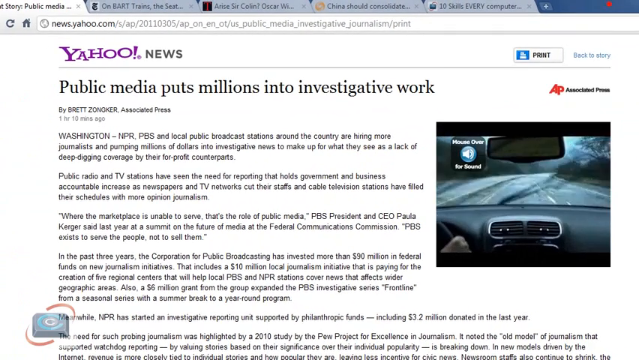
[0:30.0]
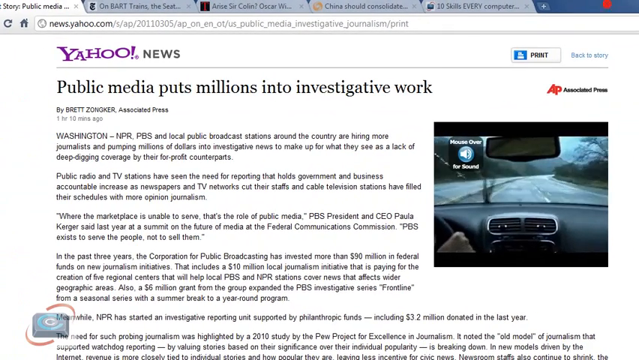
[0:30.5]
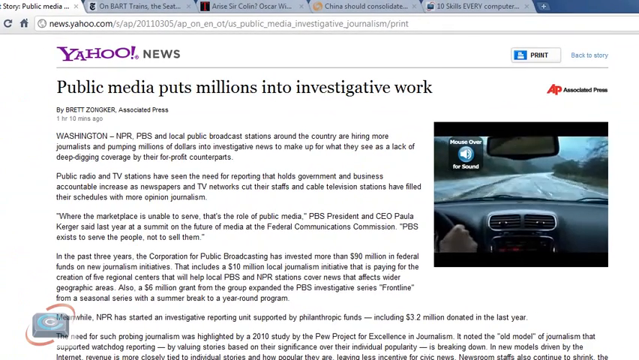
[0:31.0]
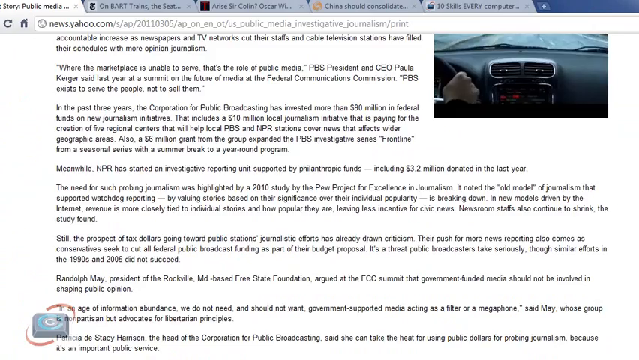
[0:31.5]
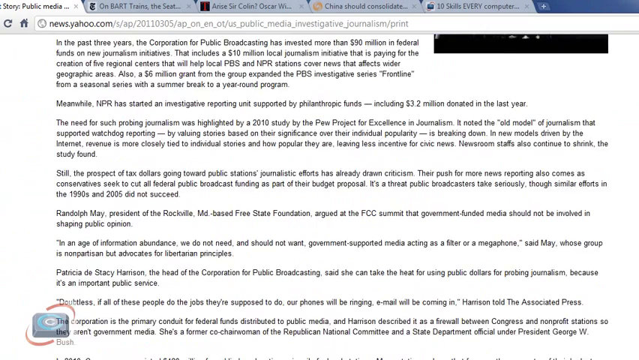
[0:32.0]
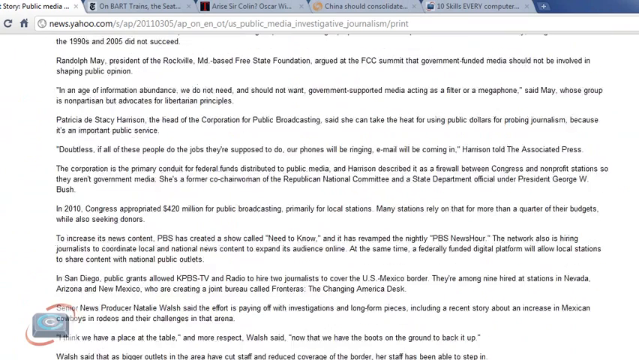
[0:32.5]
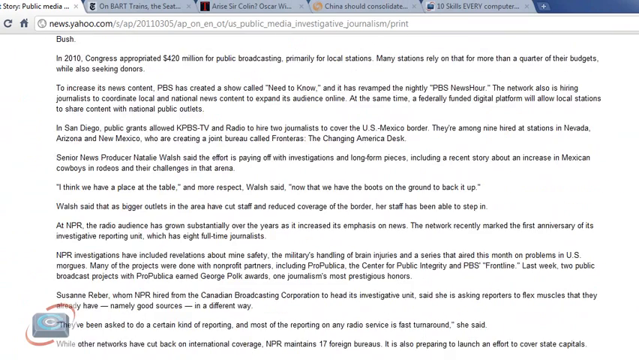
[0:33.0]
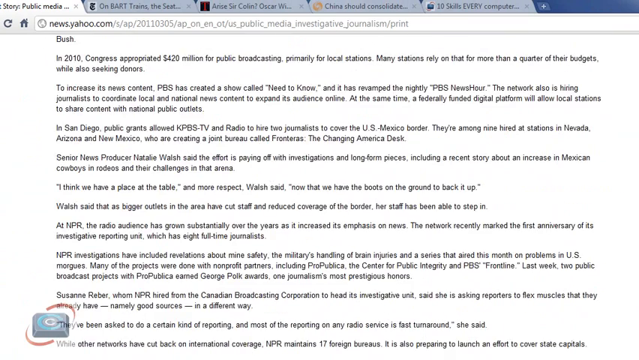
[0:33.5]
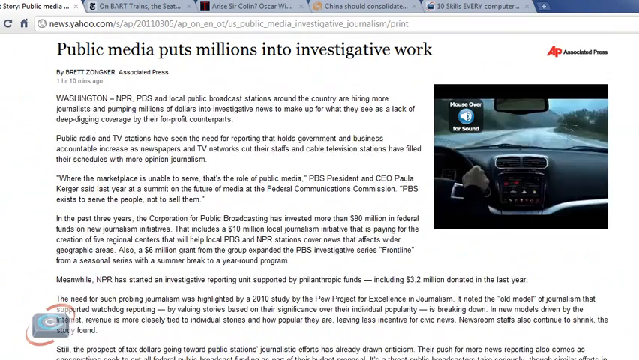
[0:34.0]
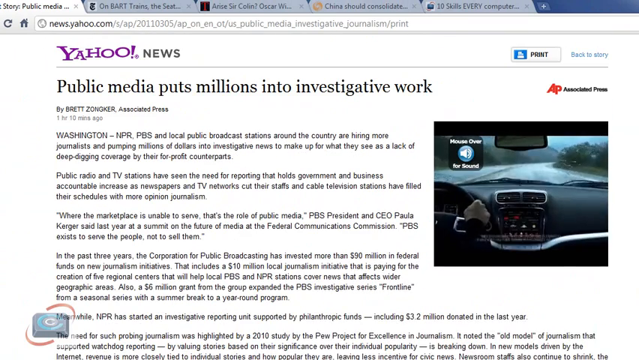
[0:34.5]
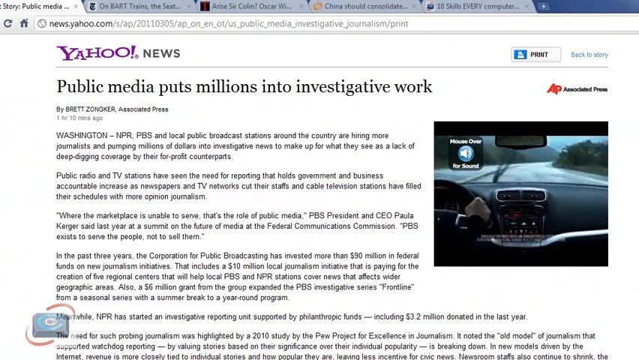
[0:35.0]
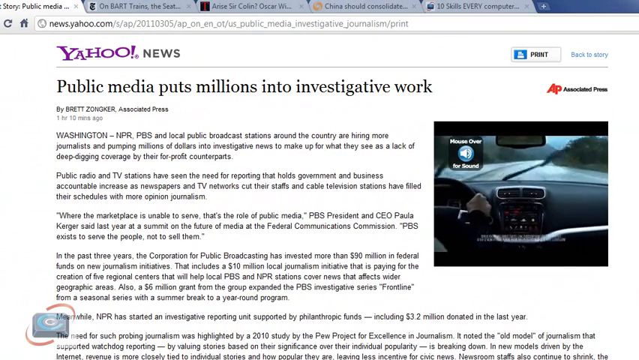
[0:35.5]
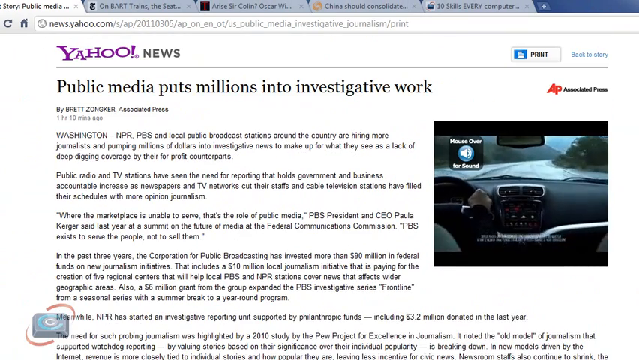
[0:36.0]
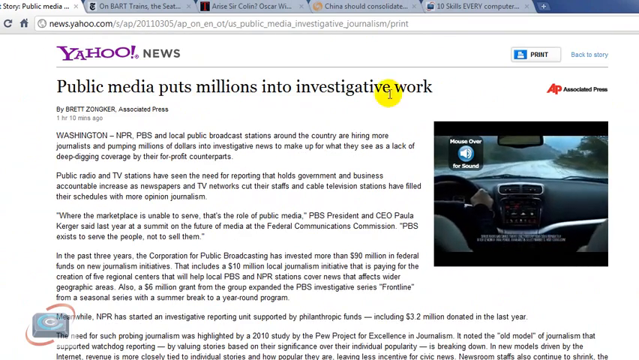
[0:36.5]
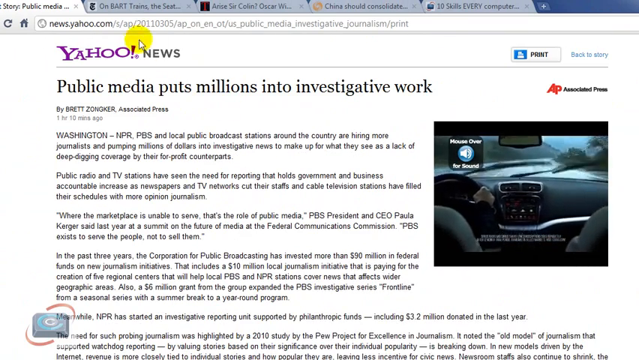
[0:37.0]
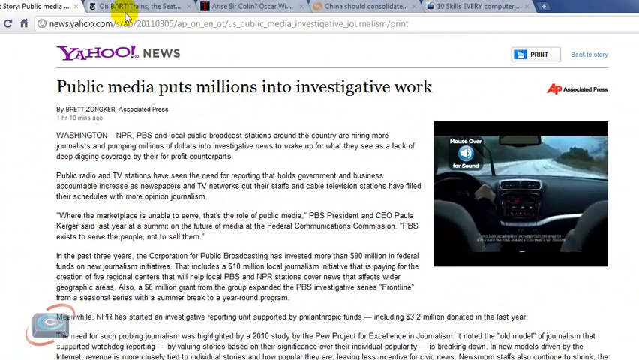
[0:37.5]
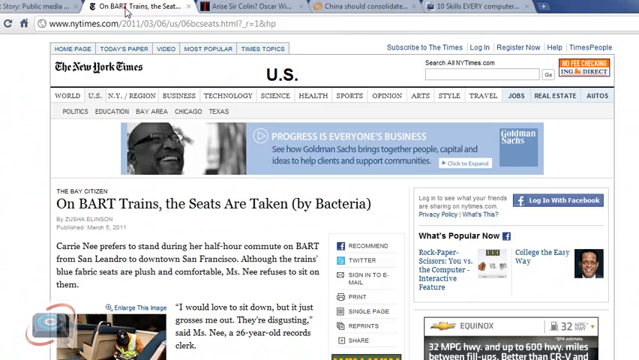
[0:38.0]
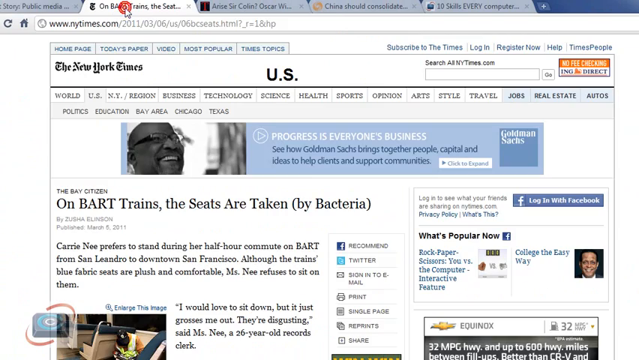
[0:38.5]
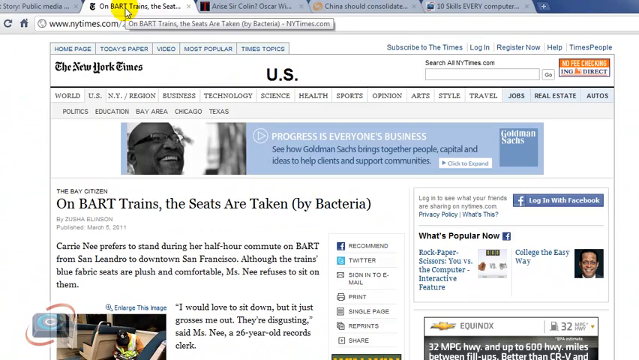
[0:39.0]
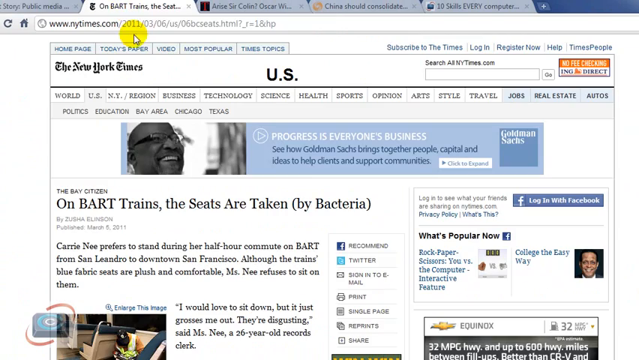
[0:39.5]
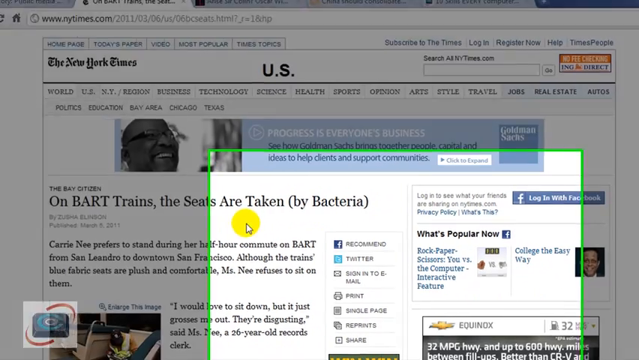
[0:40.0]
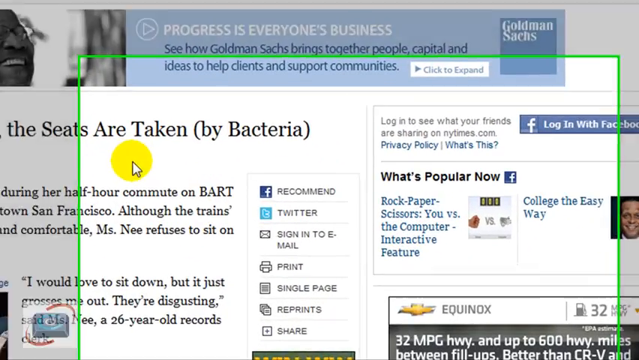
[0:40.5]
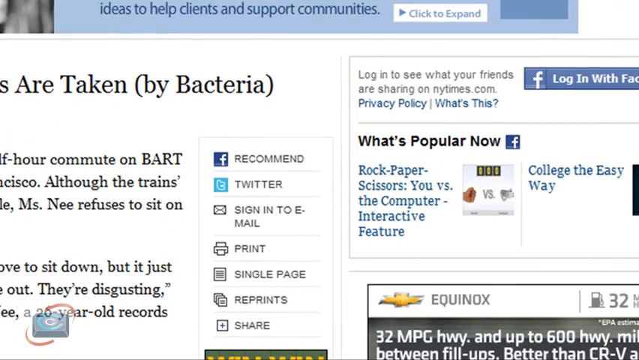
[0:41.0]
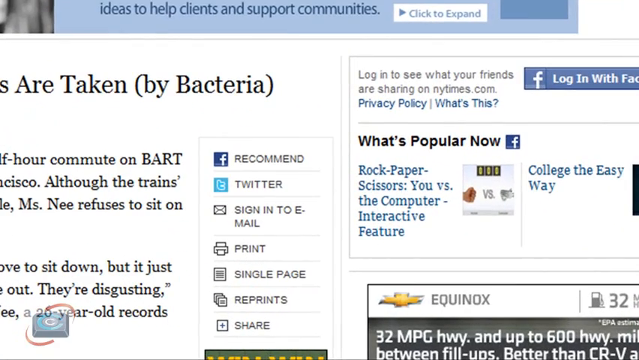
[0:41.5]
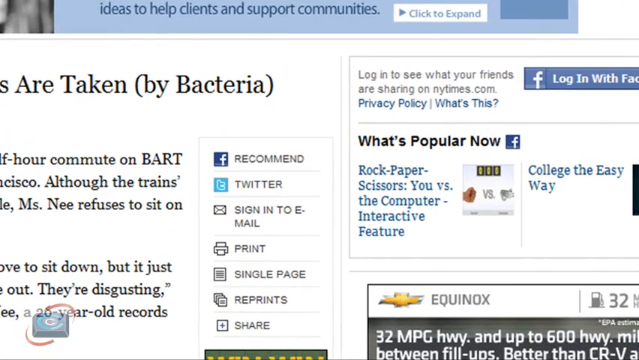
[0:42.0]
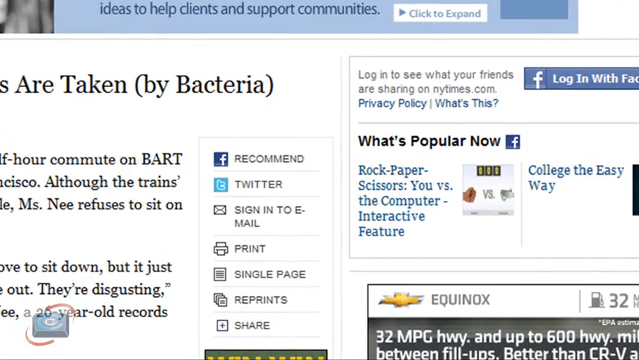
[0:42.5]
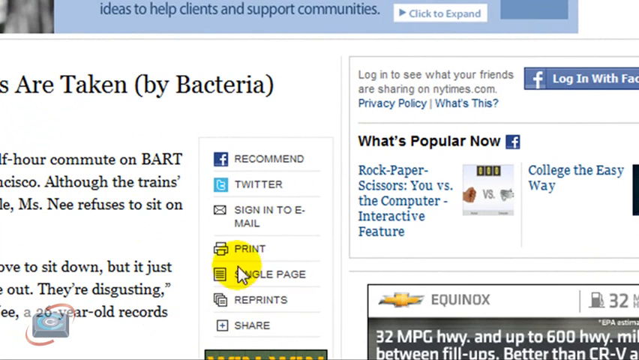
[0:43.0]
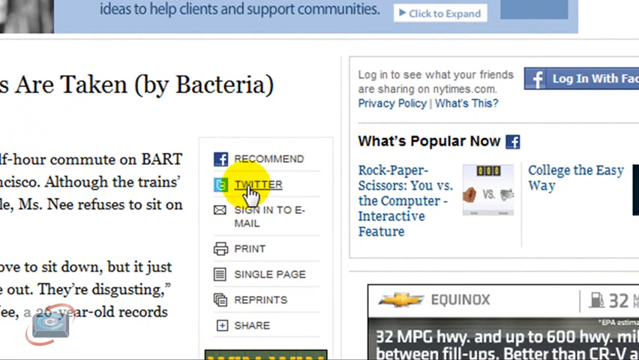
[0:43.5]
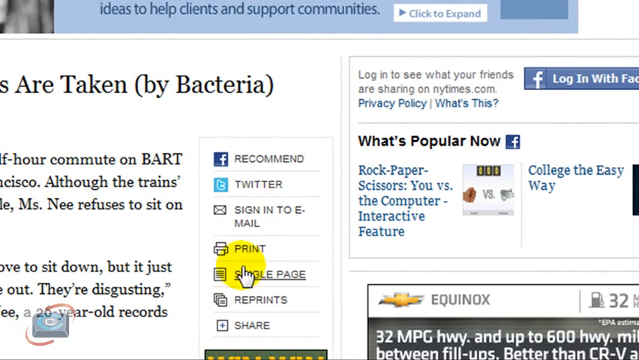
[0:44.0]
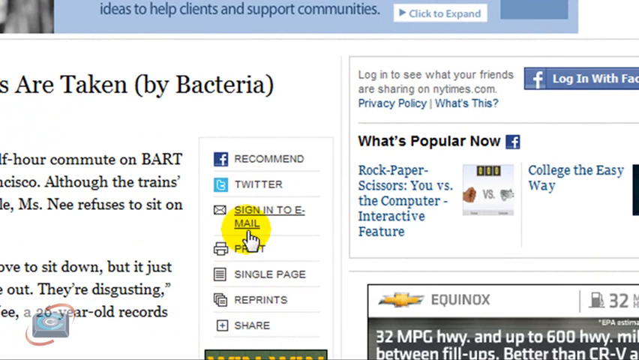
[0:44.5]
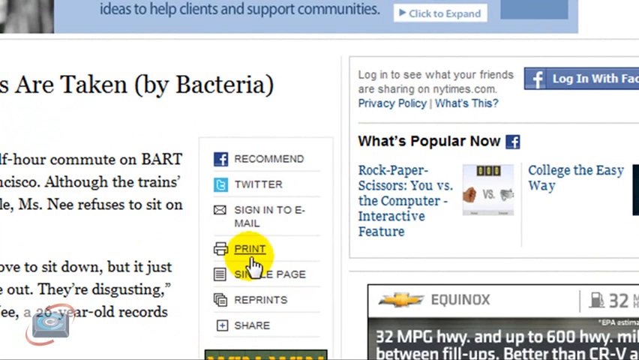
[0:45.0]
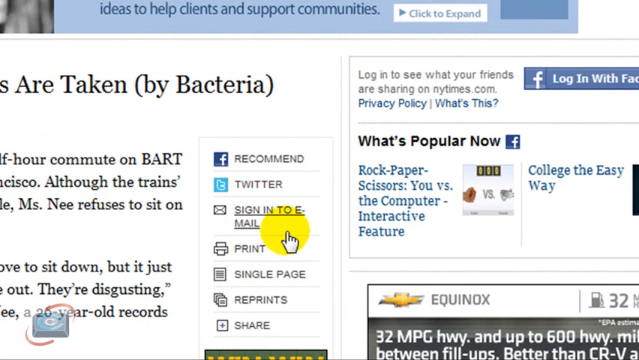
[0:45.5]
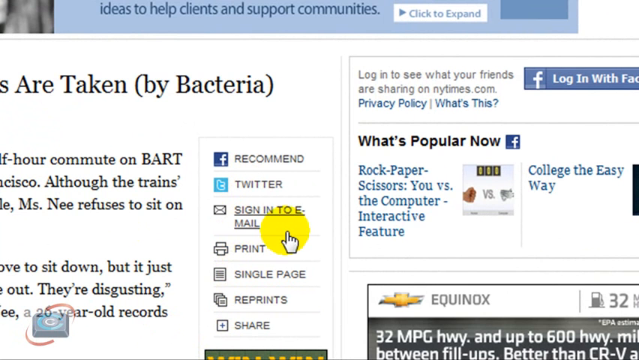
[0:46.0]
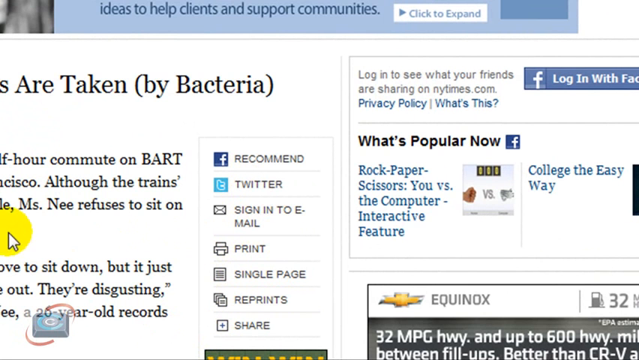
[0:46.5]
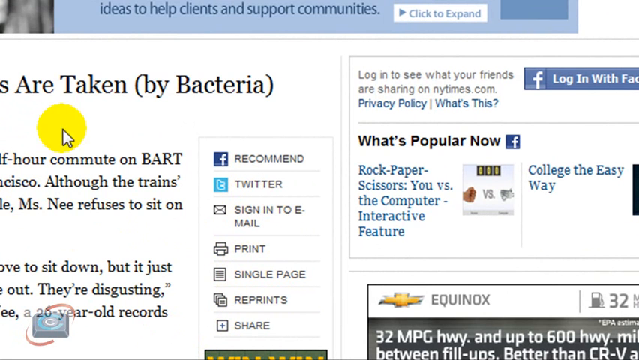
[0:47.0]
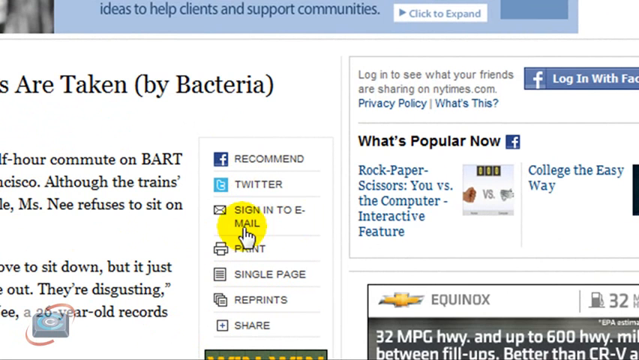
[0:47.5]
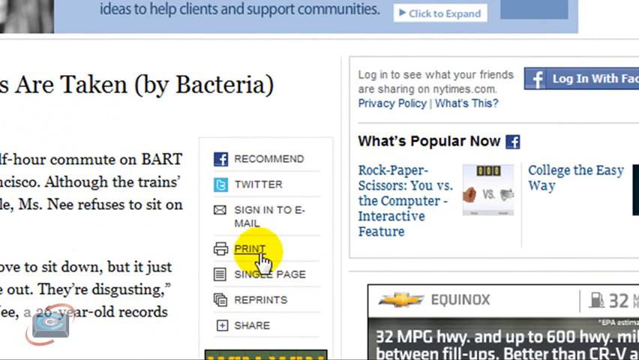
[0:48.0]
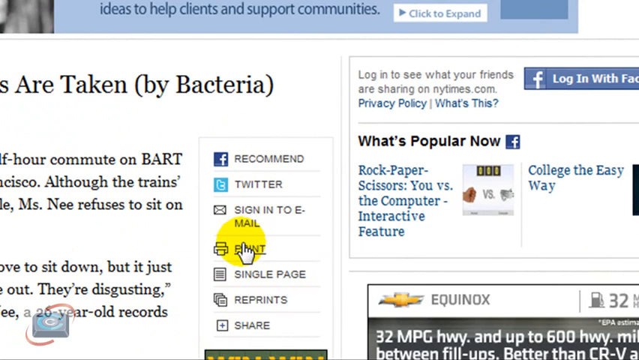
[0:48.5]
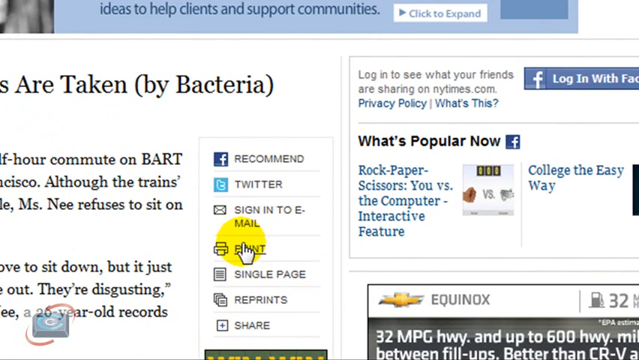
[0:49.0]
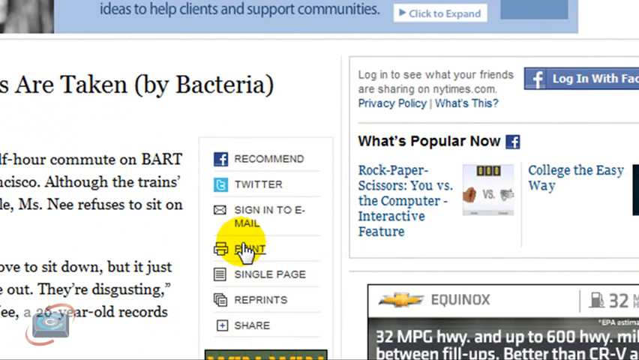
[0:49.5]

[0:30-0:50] A Yahoo News page features an article about public media putting millions into investigative work, with a black-and-white video of a car driving on the side. The person scrolls up the page, then down, highlighting the article, and goes up to the top to select another article. Options for Facebook recommended, Twitter, sign into email and print are visible, along with a what's popular now section that says "rock, paper, scissors, you versus a computer, interactive future". The cursor moves randomly up and down, hitting print, then sign into email, then print again. A yellow circle surrounds the white arrow, making the cursor easy to follow as it moves.